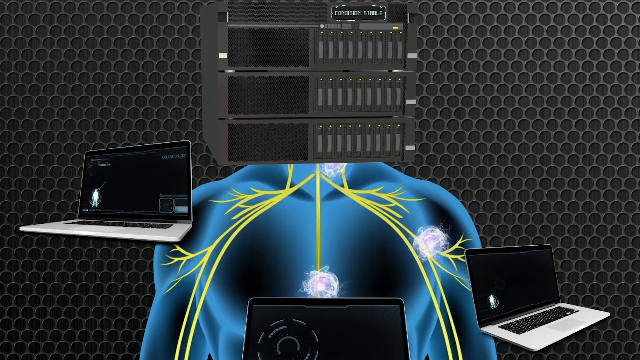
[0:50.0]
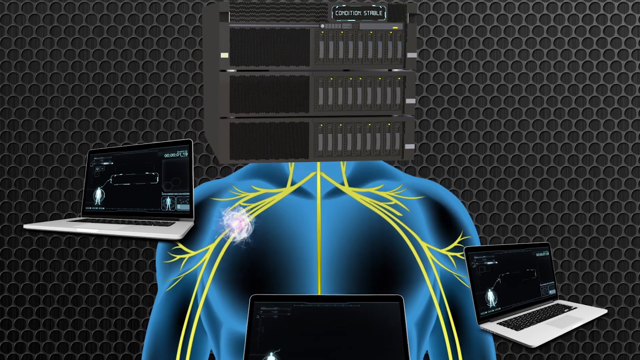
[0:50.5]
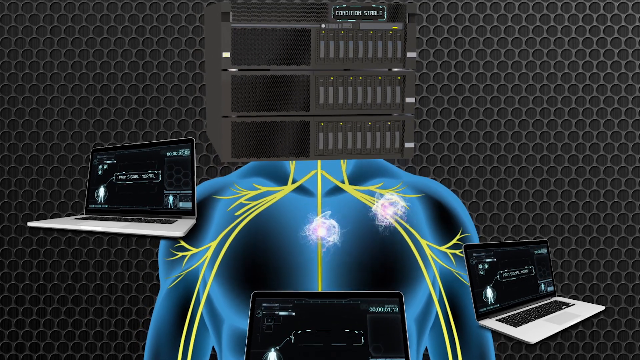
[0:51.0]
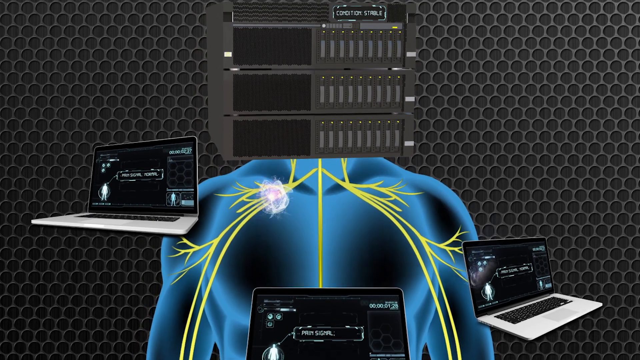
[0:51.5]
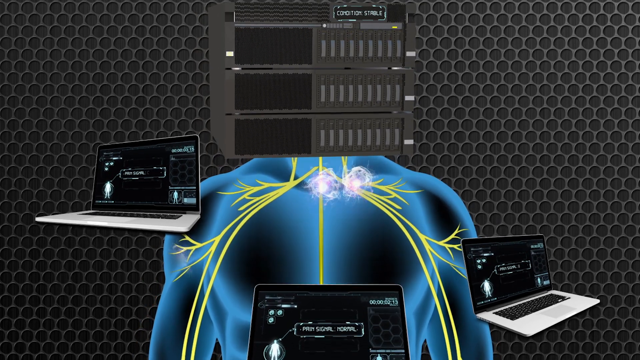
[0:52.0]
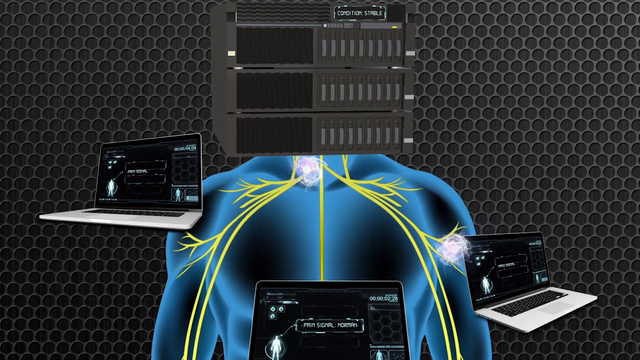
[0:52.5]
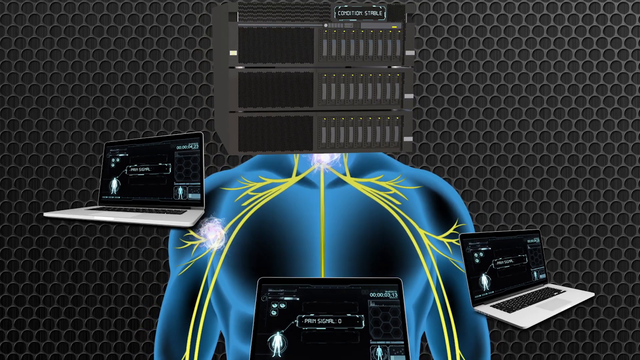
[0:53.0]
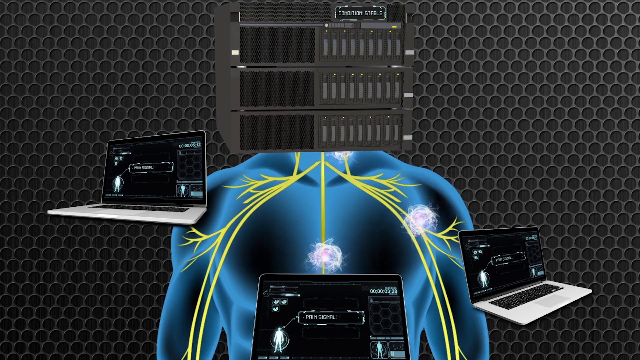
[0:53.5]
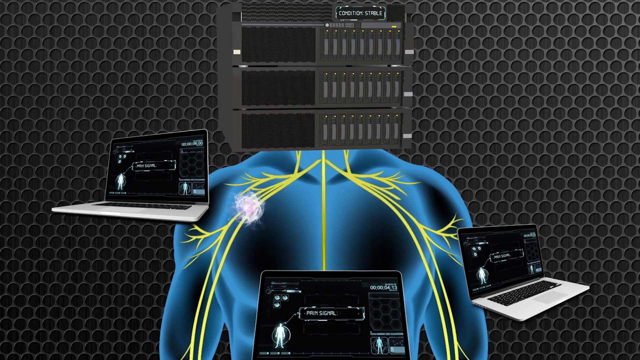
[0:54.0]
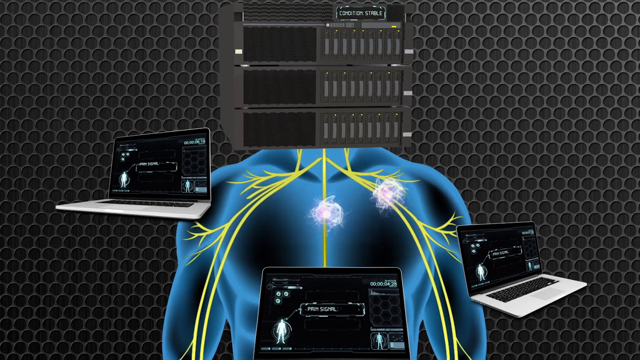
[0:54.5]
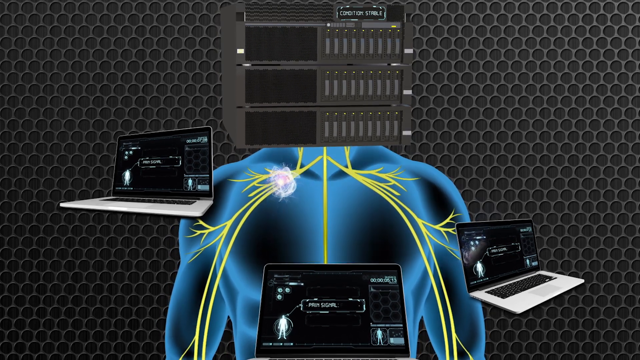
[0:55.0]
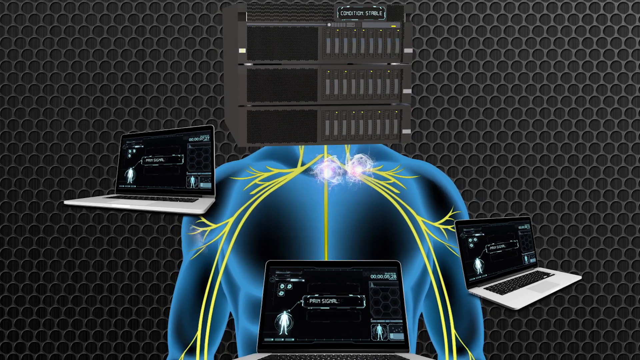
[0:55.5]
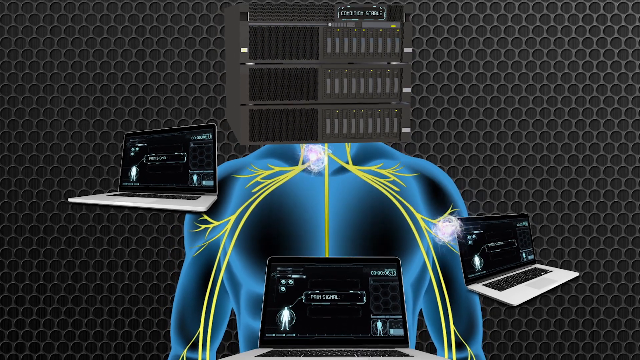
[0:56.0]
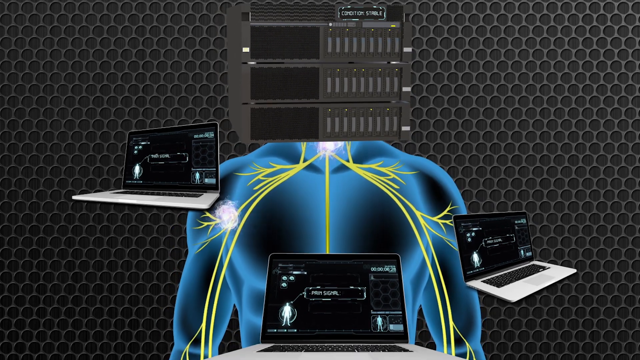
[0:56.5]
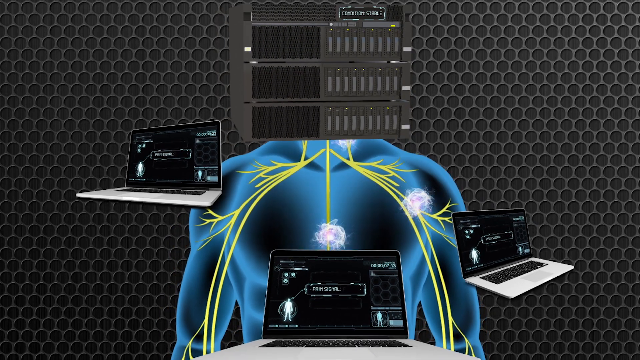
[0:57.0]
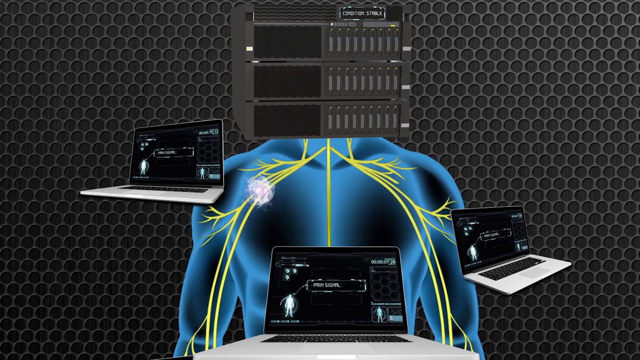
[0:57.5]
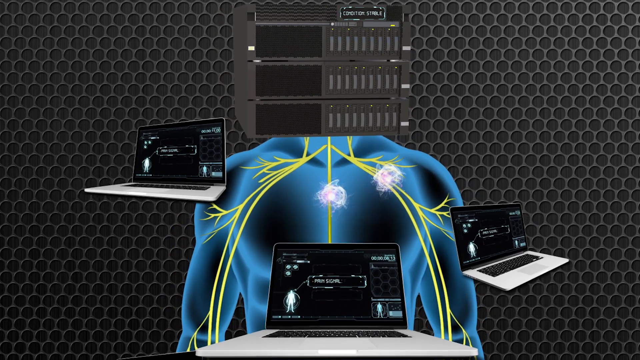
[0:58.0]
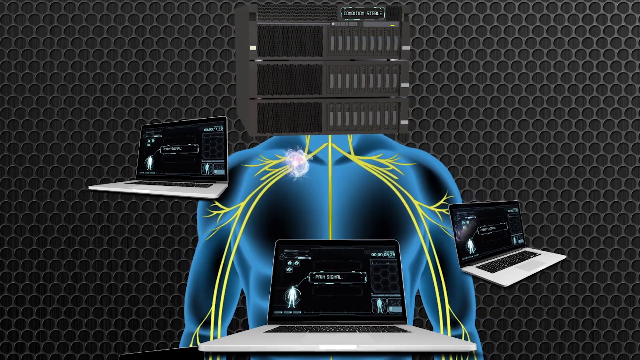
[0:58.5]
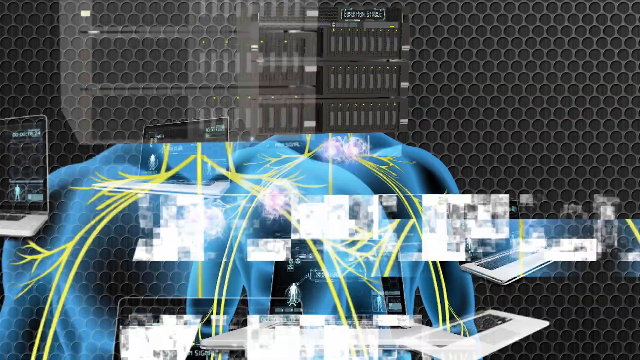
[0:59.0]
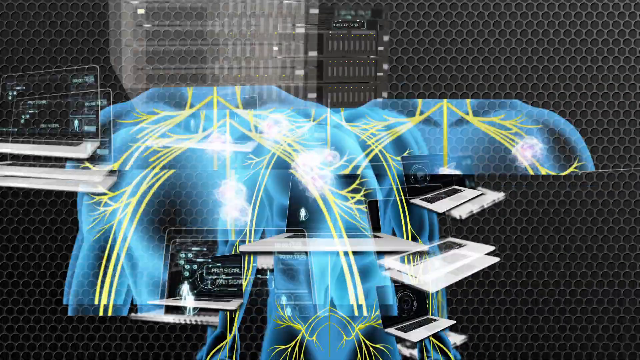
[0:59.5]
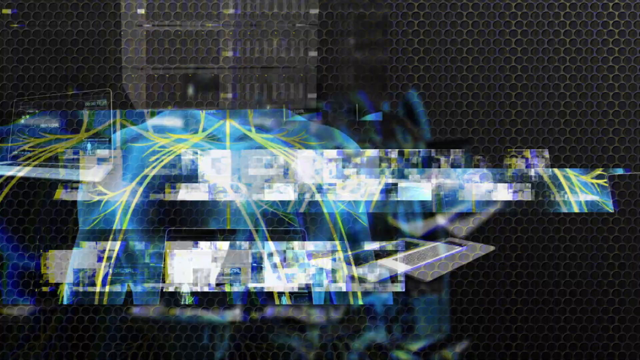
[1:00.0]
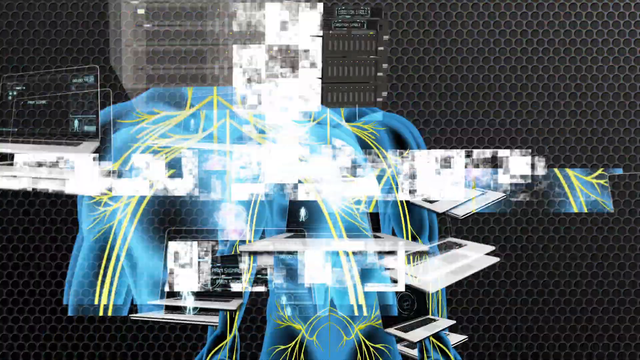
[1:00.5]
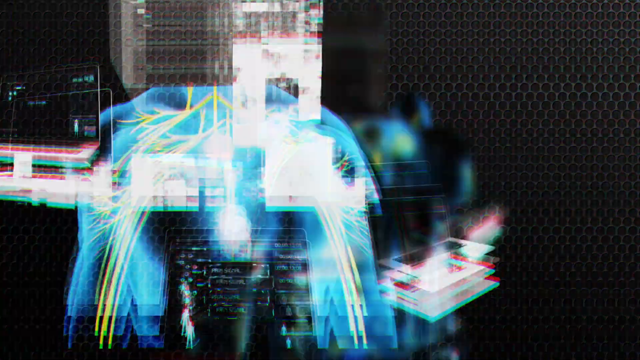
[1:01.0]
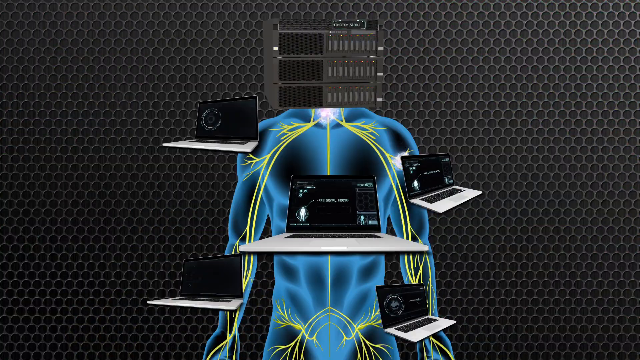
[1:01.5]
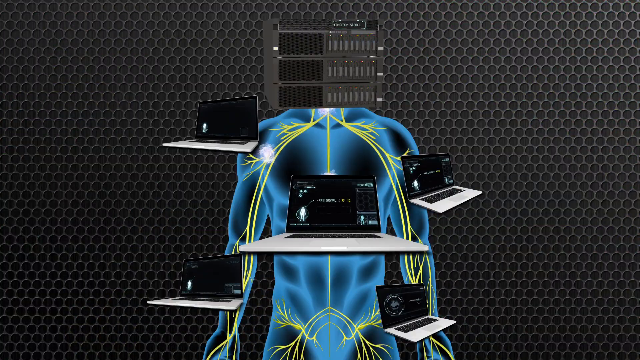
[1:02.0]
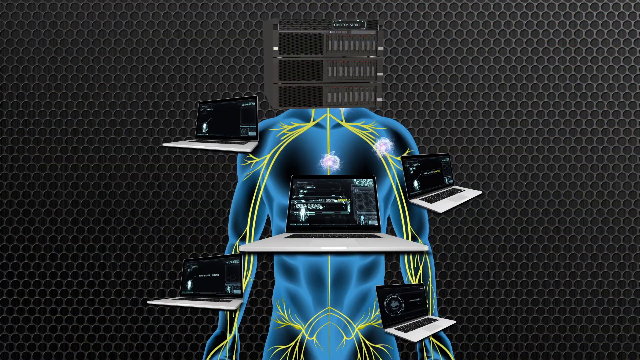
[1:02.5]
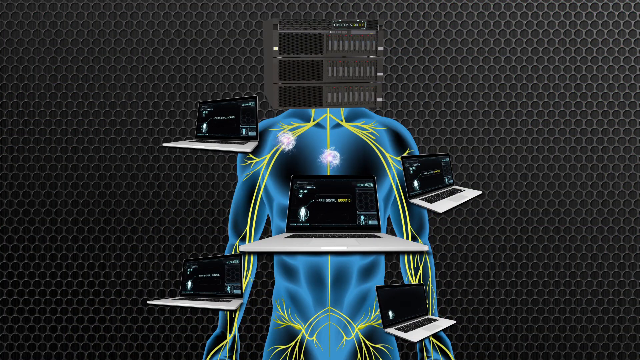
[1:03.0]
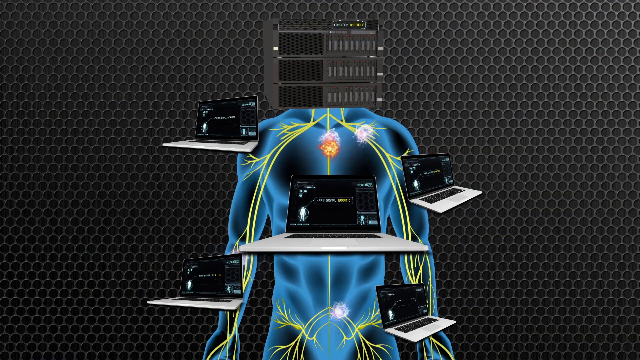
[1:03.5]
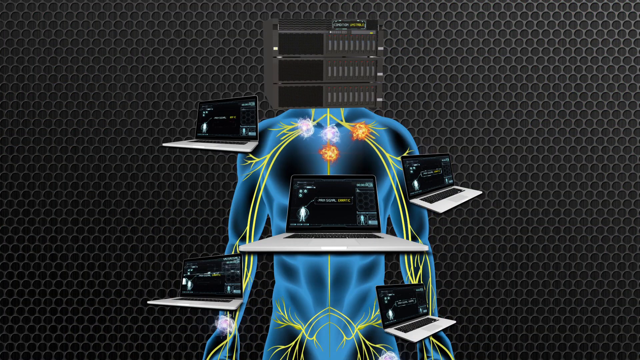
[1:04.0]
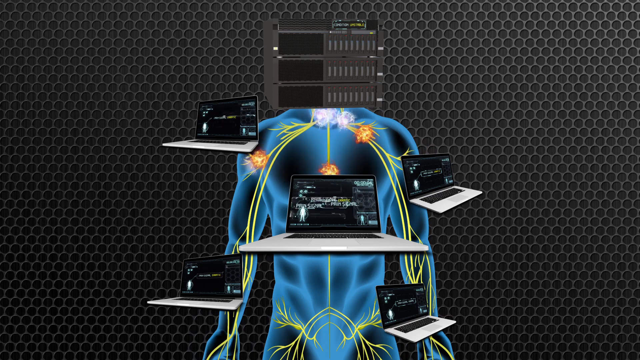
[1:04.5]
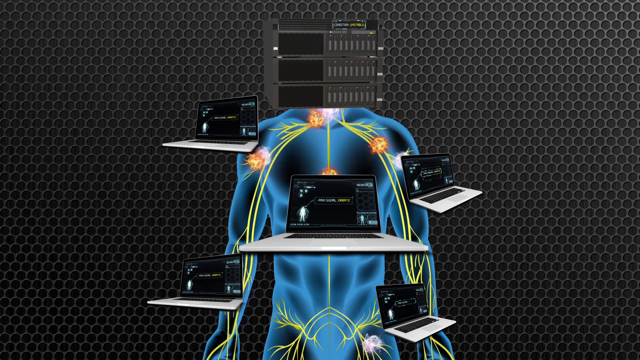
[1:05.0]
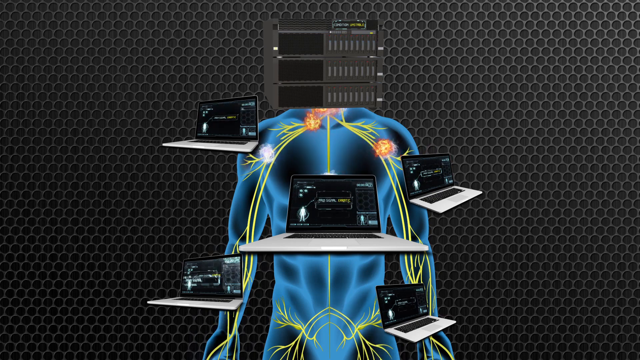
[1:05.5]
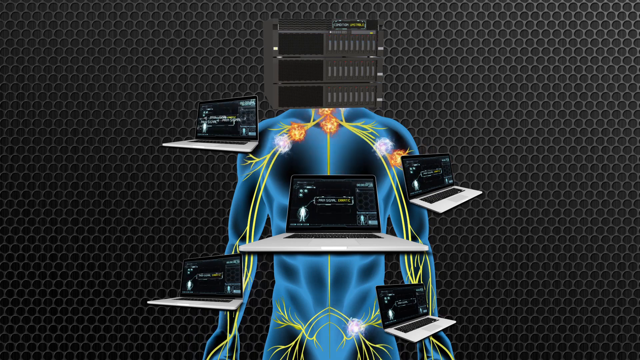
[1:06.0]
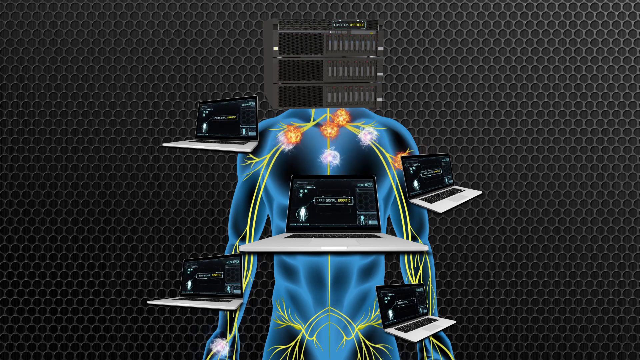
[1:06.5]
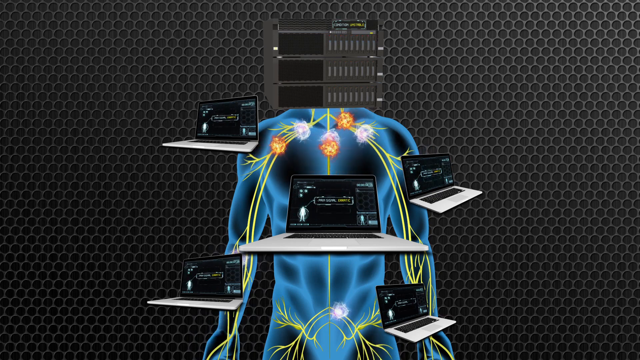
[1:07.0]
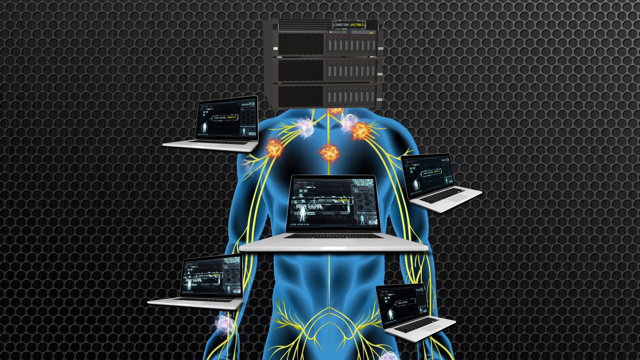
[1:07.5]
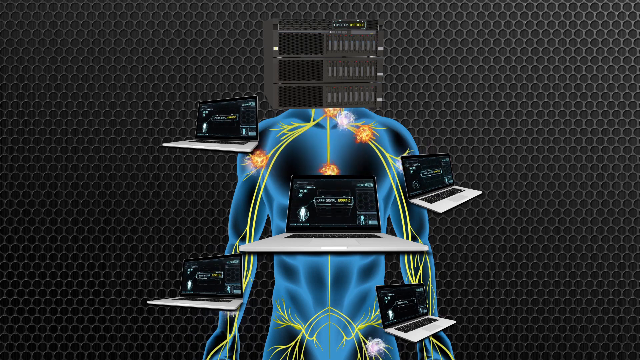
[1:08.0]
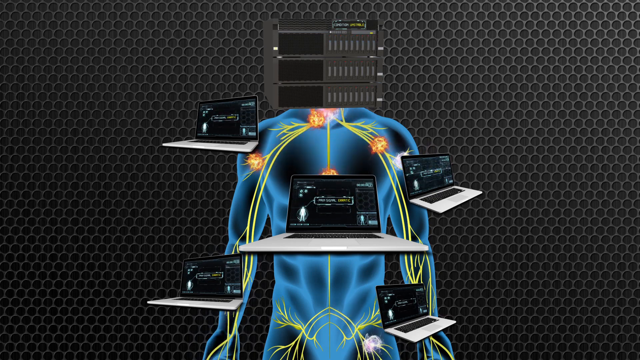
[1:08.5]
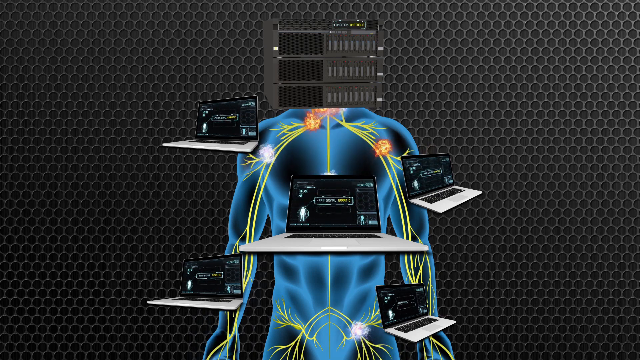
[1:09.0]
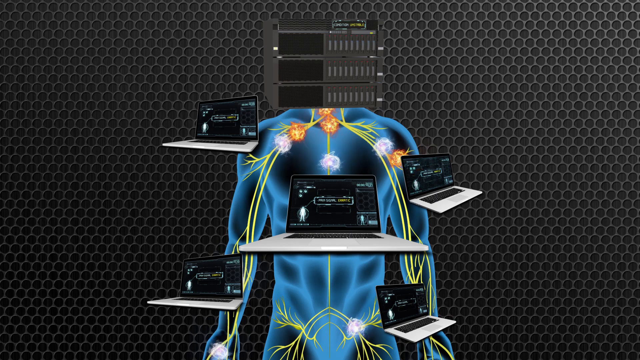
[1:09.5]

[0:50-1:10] The pain travels through the yellow veins into three different laptops, with the nerve endings coming from the control center at the top, a square box that says "control". The flow continues slowly toward the laptops, and then five more laptops appear with orbs of different colors moving very fast into the control center. The screen glitches a little, then shows the fast-moving orbs coming from the laptops. The laptop screens show a lot of movement, with some words passing through, and an anatomy of the body in the bottom left of the laptop screen. The orbs move quickly through every yellow vein in the body anatomy.